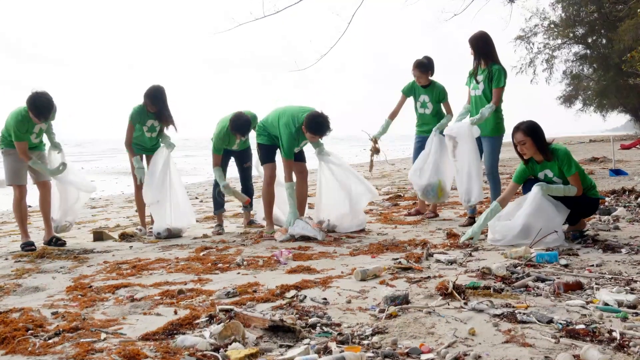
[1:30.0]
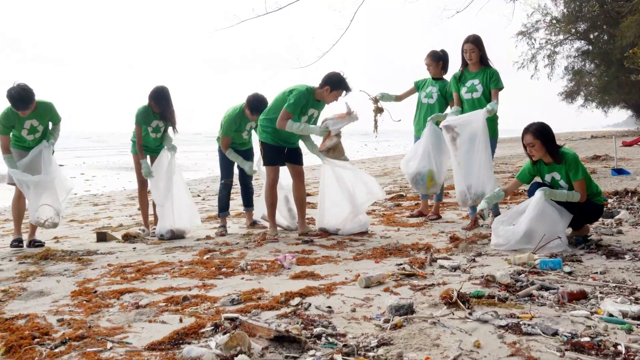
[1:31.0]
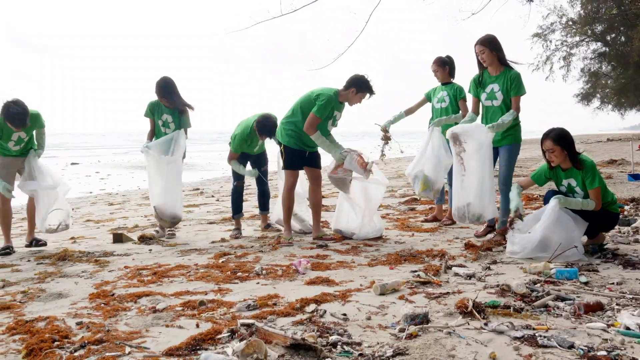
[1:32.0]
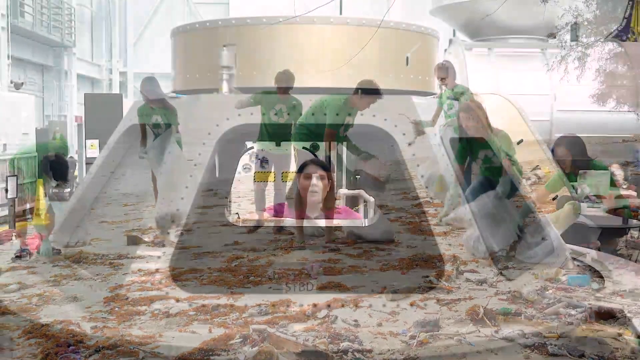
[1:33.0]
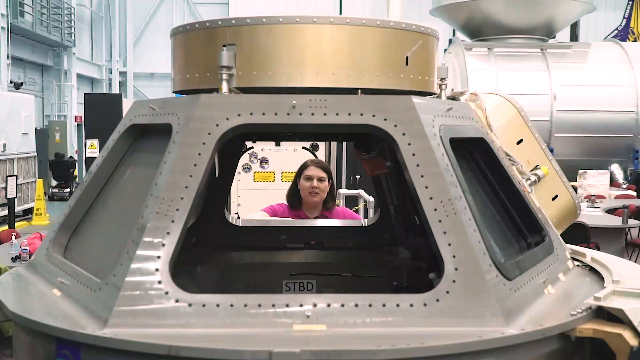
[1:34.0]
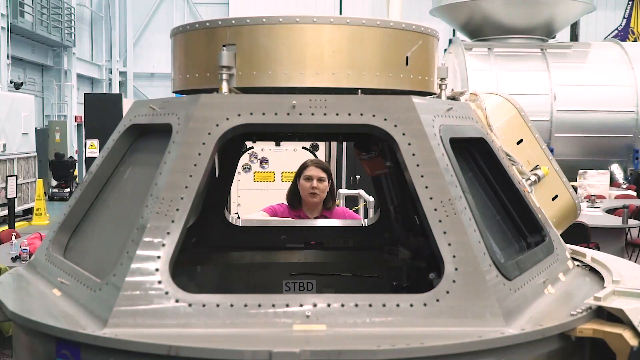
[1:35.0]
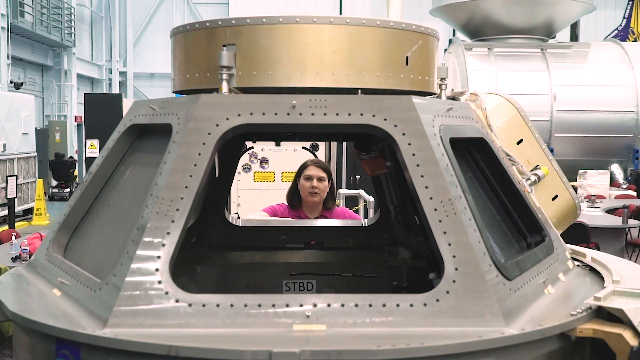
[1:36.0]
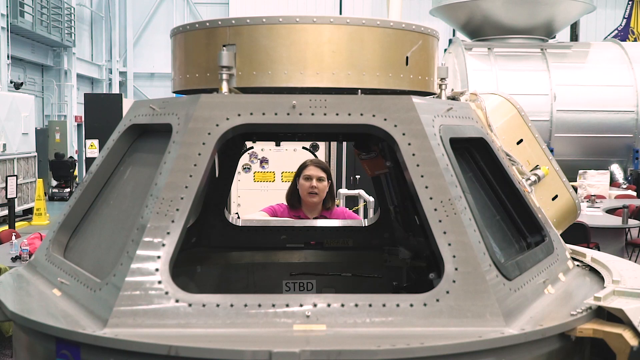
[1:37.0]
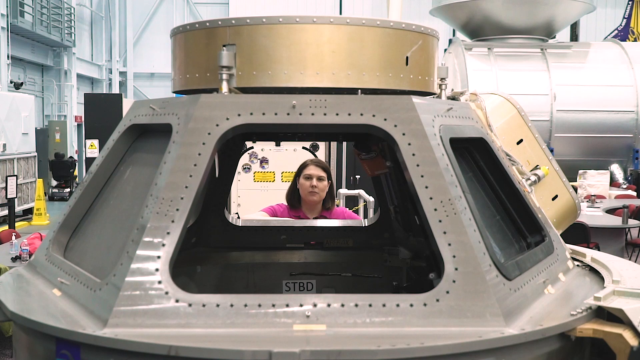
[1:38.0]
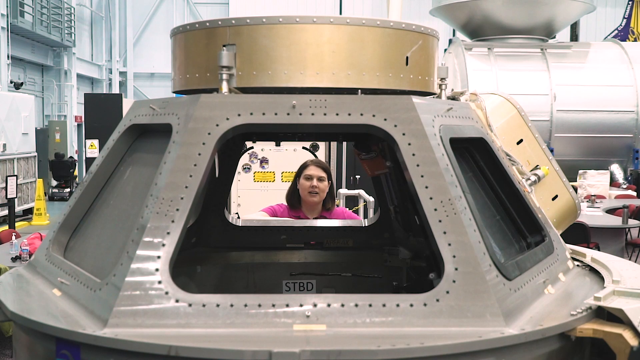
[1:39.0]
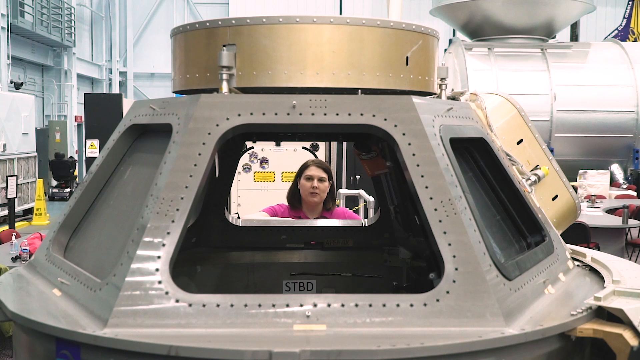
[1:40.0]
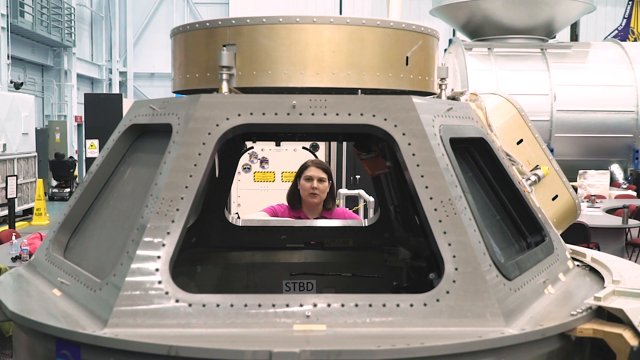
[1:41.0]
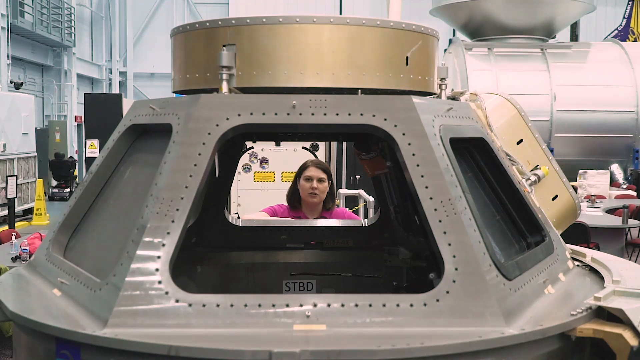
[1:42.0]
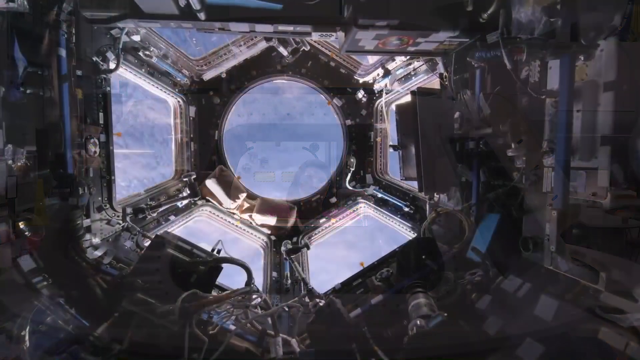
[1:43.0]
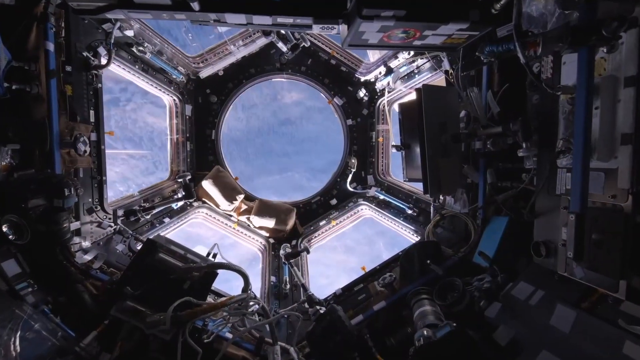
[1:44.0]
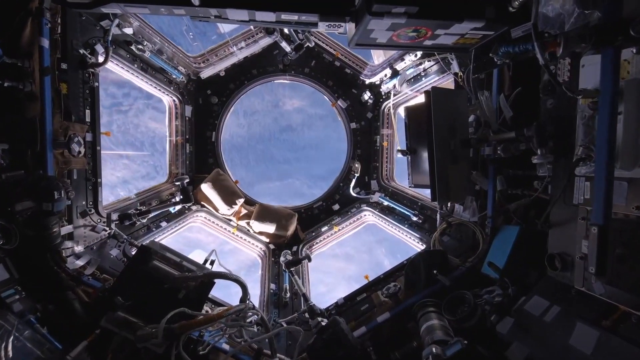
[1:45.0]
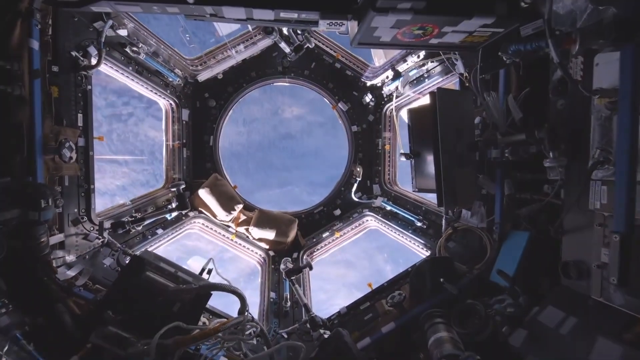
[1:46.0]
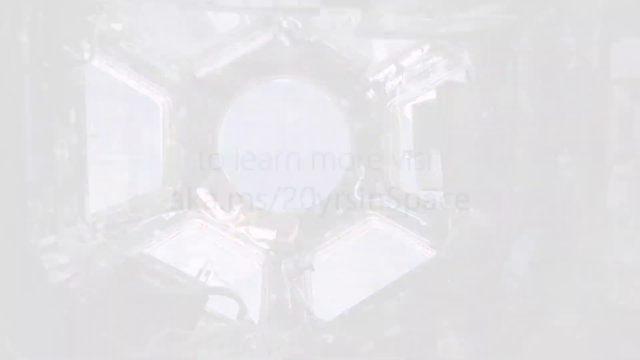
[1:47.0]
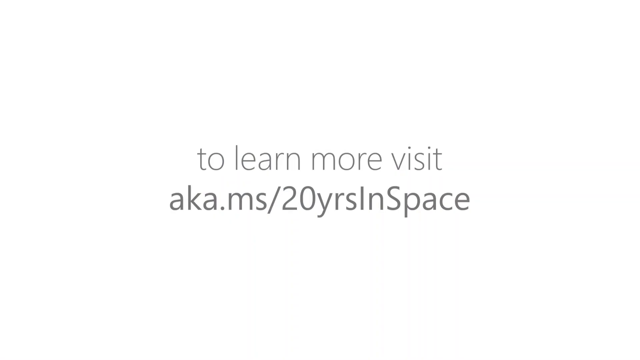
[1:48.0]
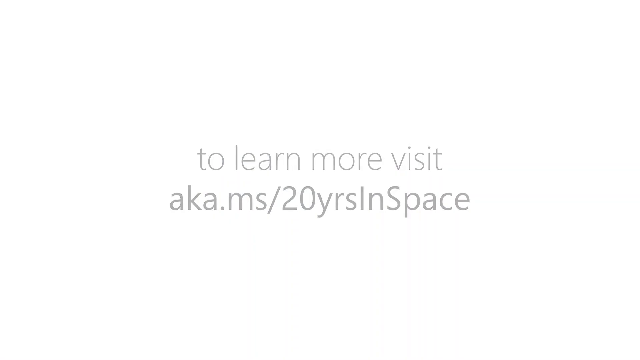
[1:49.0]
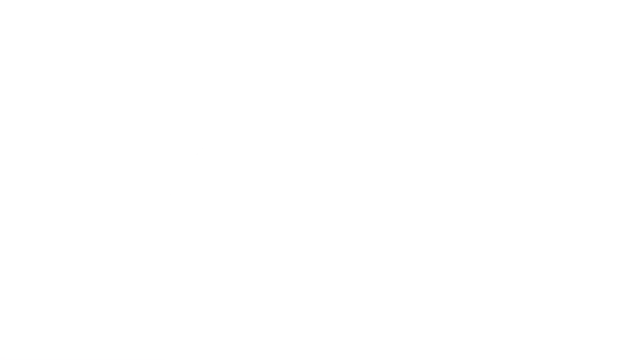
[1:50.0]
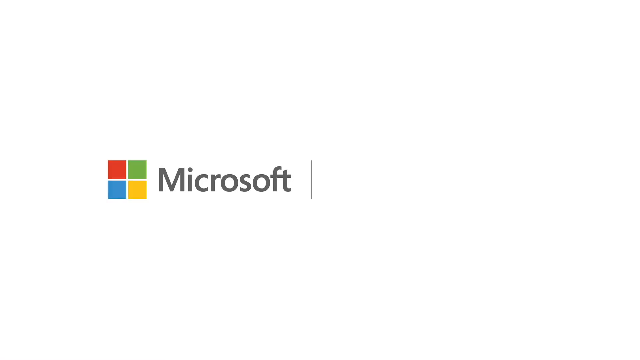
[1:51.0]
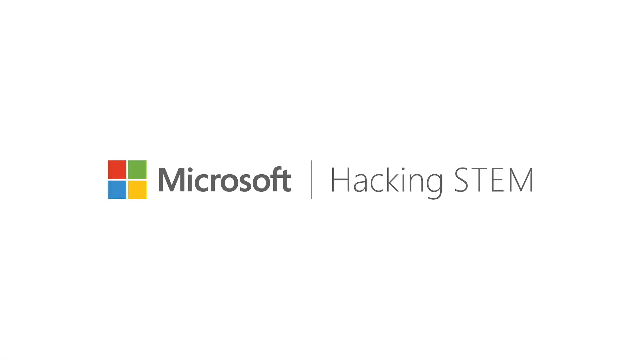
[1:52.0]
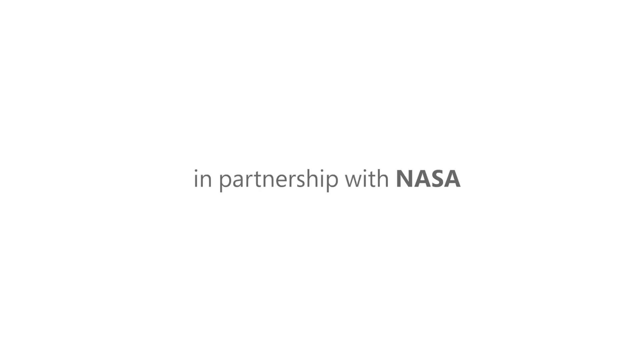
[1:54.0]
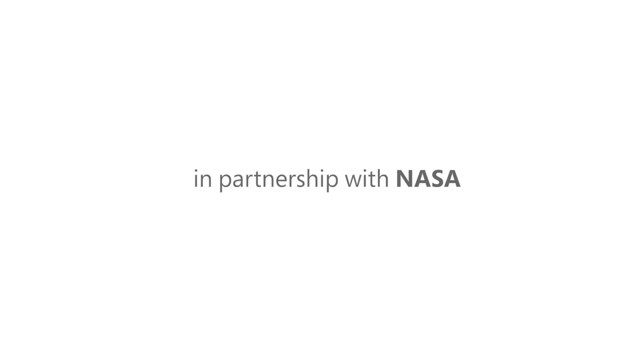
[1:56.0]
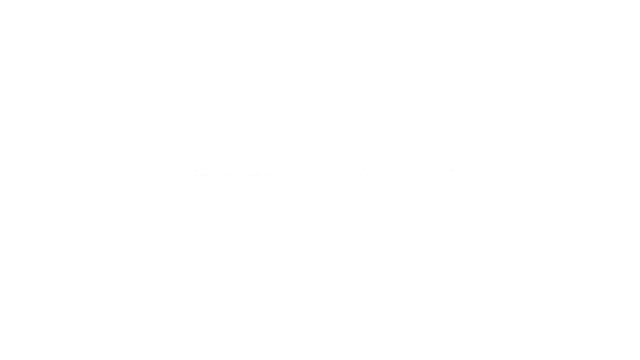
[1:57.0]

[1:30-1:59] What look like young teenagers pick up debris on the beach. They all wear green recycling symbols on their chests and have gloves and bags. A Caucasian woman appears around the capsule, and then there is a view through the windows of a capsule in space. Text reads "to learn more, visit a", followed by "Microsoft" with the Microsoft symbol and "hacking STEM in a partnership with NASA."